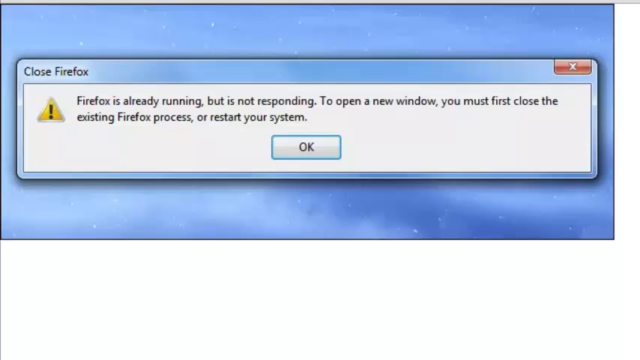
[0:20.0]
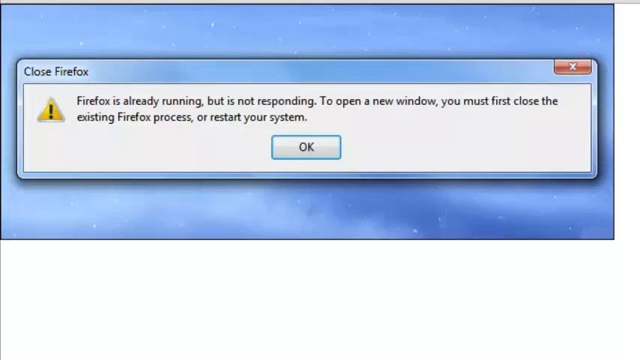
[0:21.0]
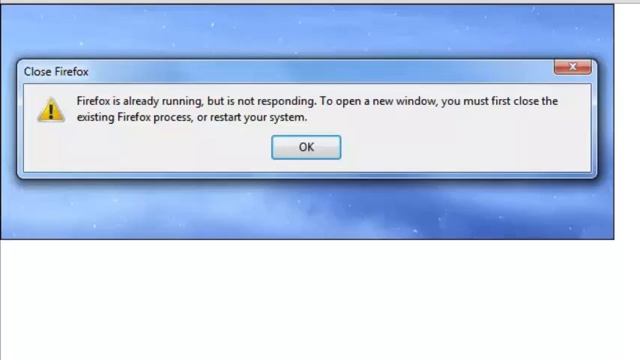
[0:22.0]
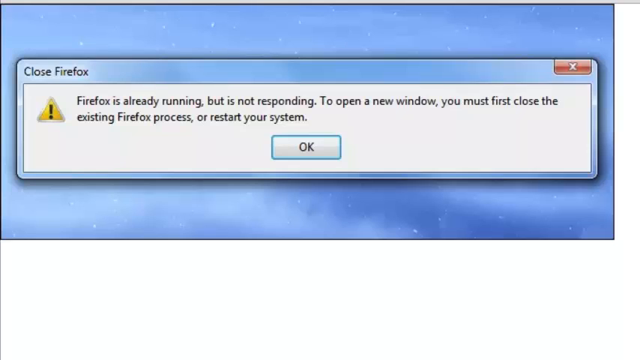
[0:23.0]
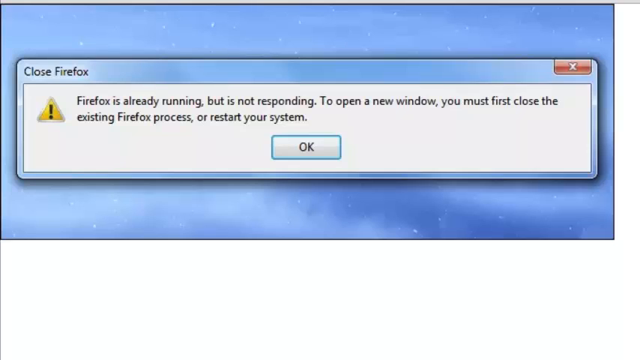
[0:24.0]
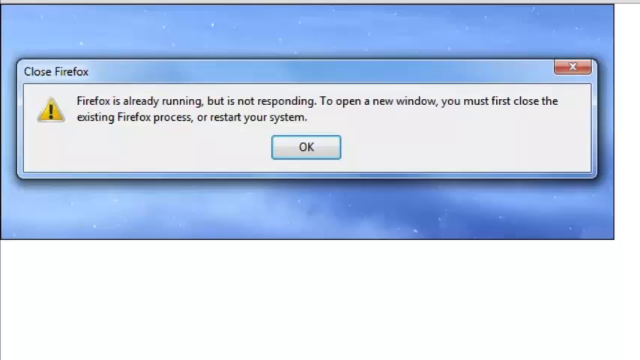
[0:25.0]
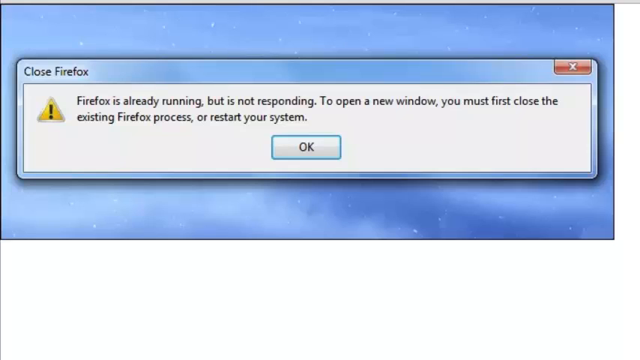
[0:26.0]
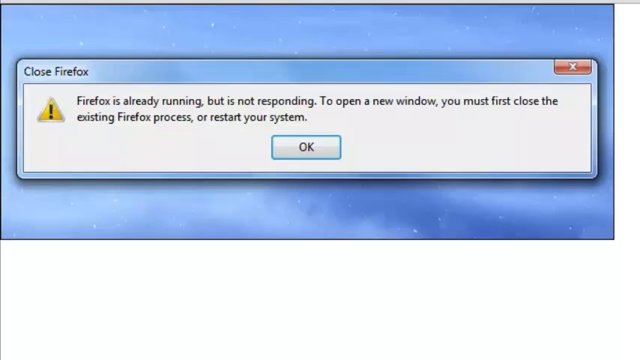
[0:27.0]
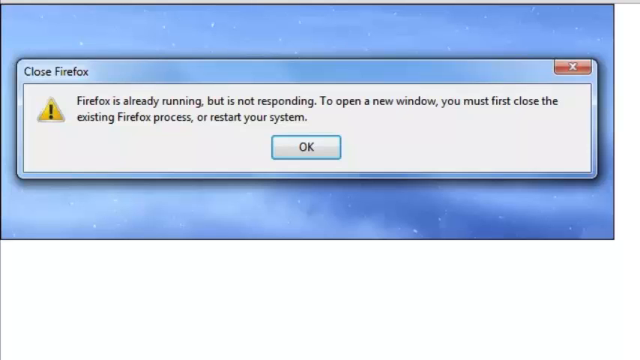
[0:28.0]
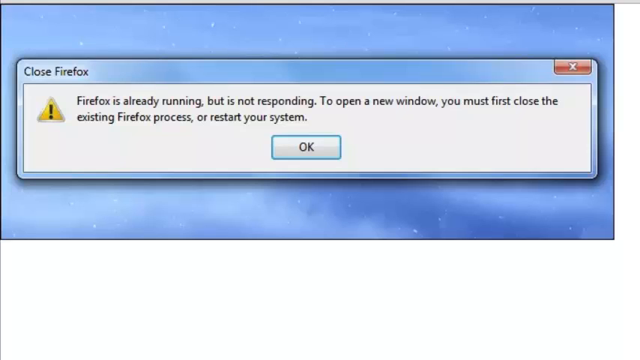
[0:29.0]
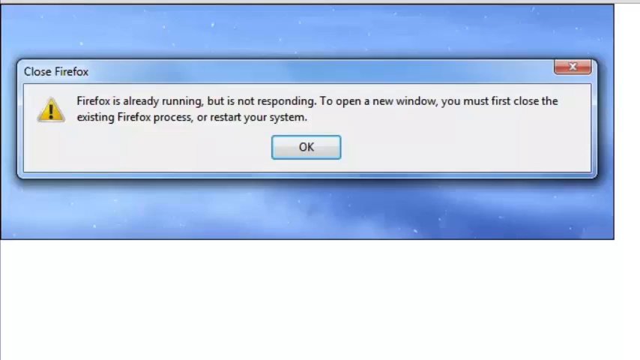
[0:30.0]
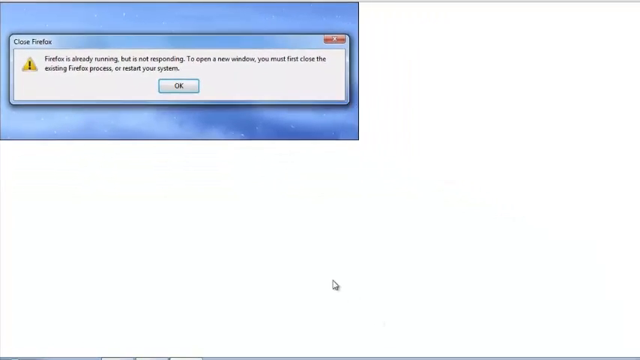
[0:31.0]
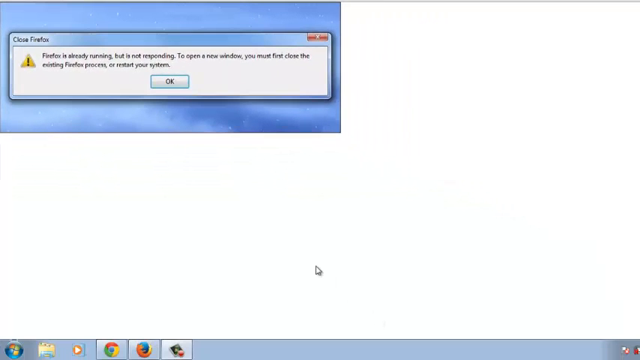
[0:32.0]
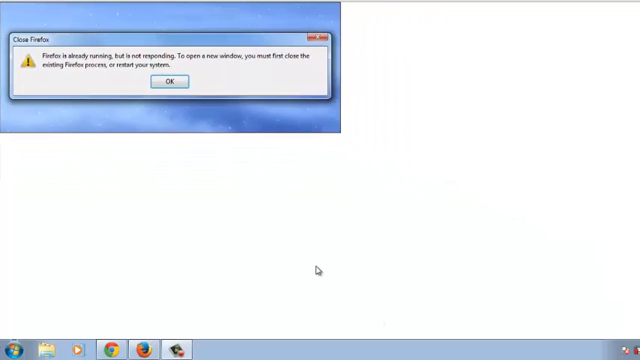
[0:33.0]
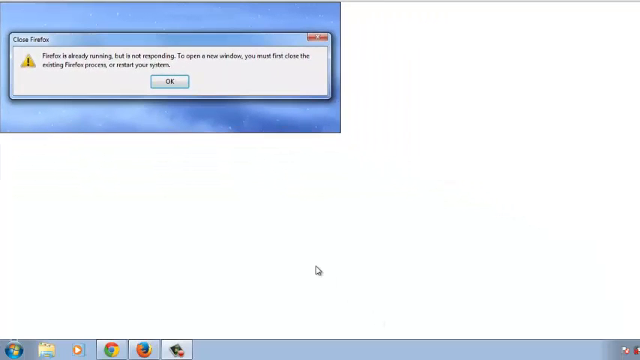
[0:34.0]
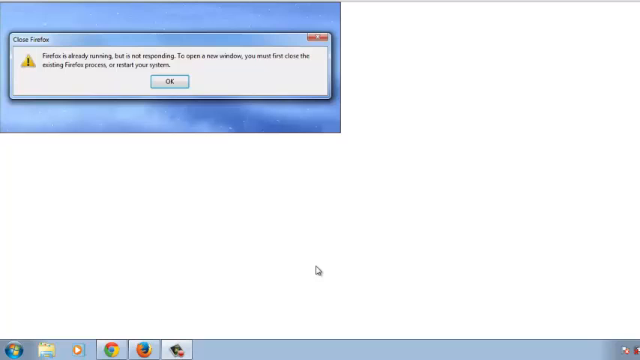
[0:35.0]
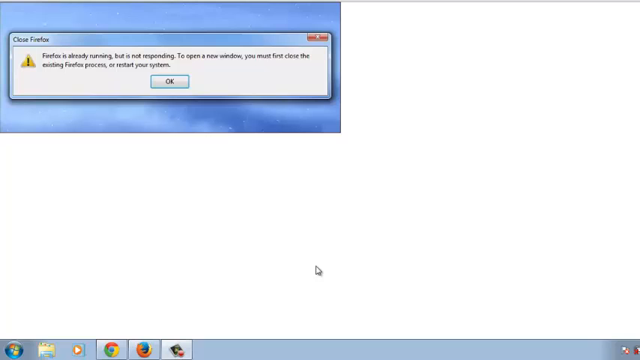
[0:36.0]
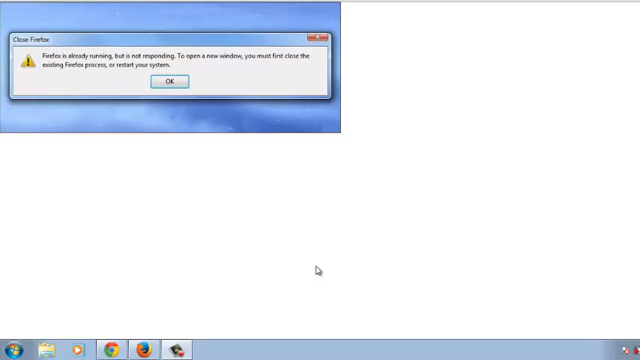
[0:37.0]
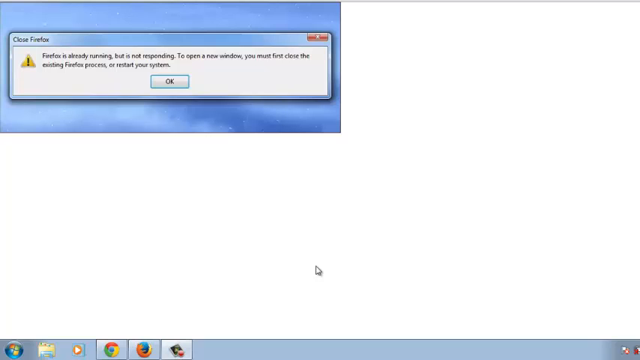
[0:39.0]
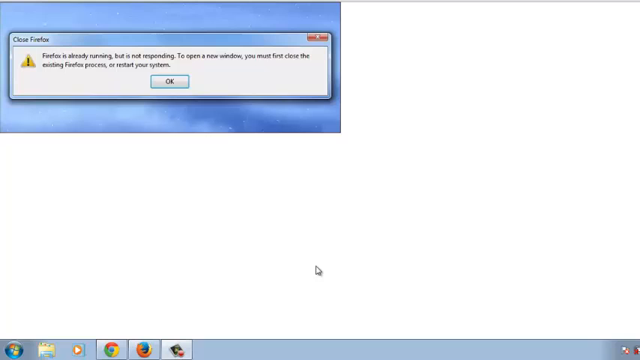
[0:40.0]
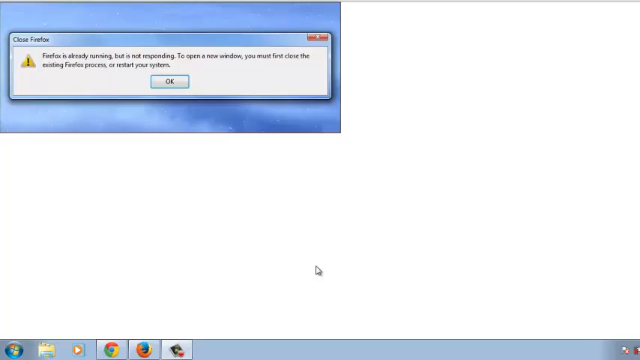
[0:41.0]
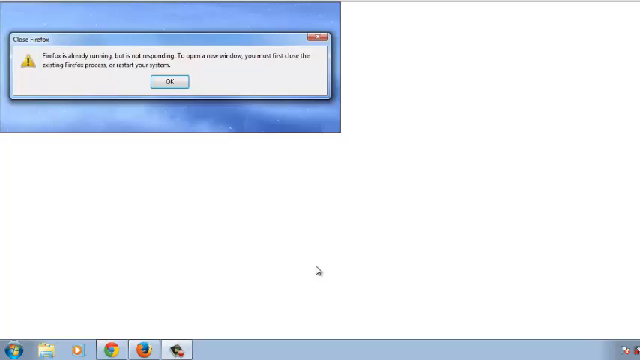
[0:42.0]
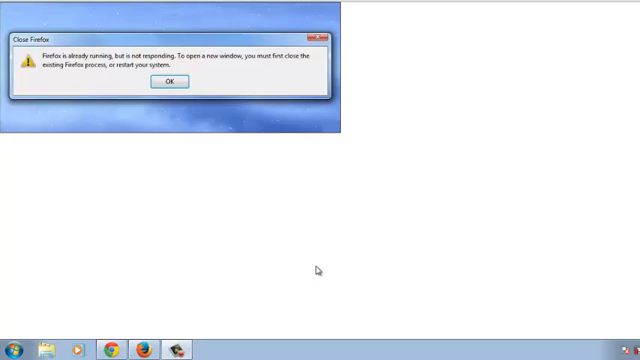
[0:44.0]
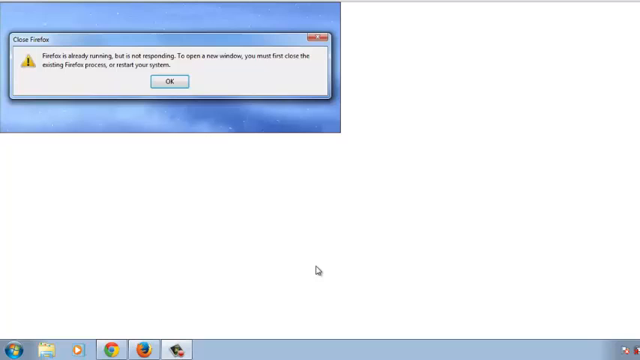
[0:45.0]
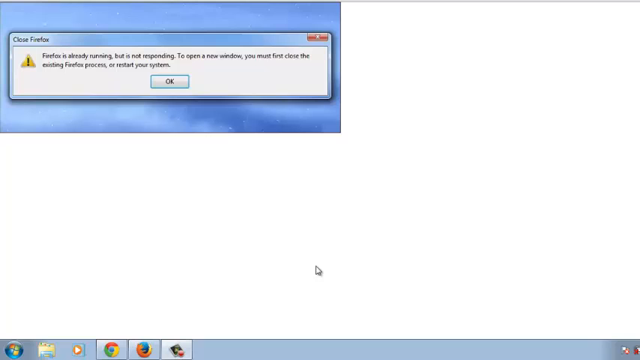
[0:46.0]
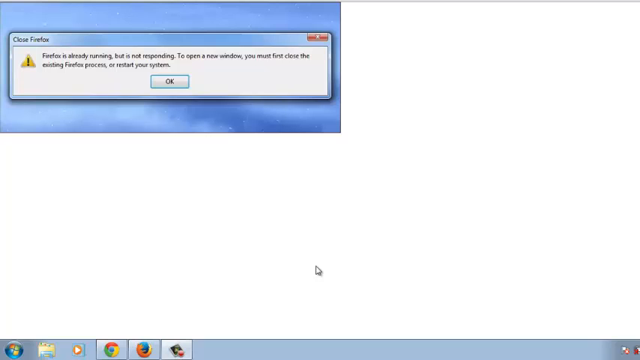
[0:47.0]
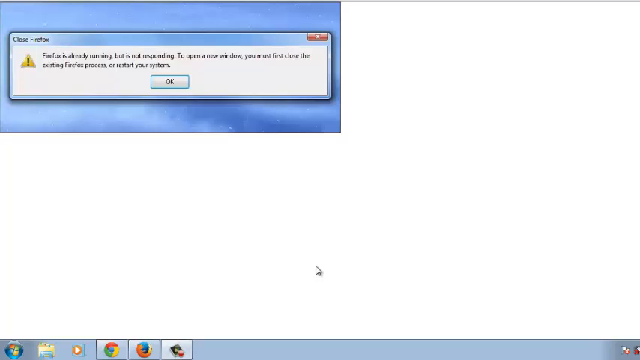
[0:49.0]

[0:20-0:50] The screen stays on the Firefox warning pop-up. The bottom third of the screen and a very slim right margin are solid white, and the rest of the screen is a blue, ethereal-like pattern that looks like the sky. In the middle of the blue area is the pop-up, on a white background, with "closed Firefox" in its top left, a red X in its top right, a warning icon on its left, the text "Firefox is already running but is not responding. To open a new window, you must first close the existing Firefox process or restart your system" in the middle, and an OK button at the bottom. After a while, the pop-up and the blue background zoom out toward the top left of the screen, and a mouse pointer appears near the bottom middle of the screen.